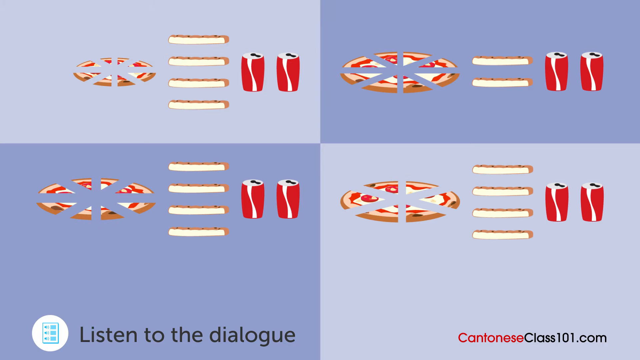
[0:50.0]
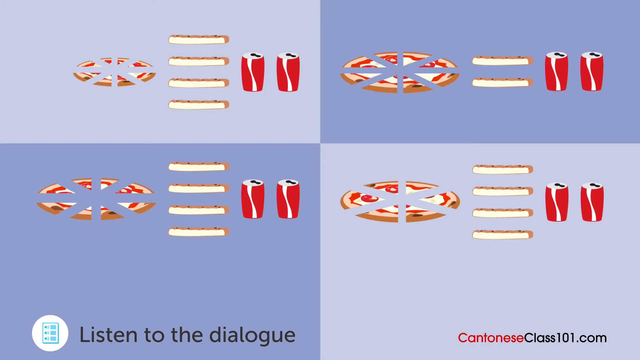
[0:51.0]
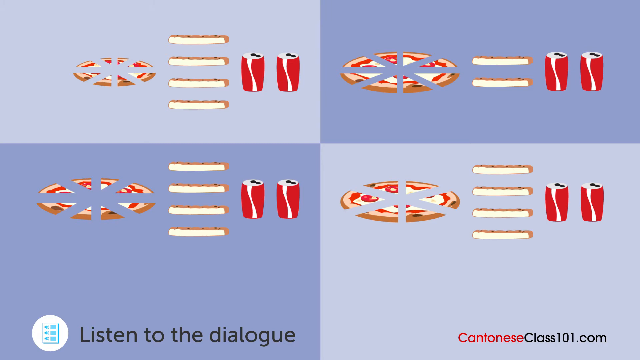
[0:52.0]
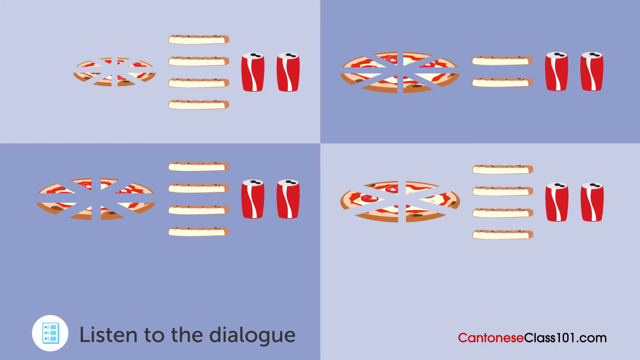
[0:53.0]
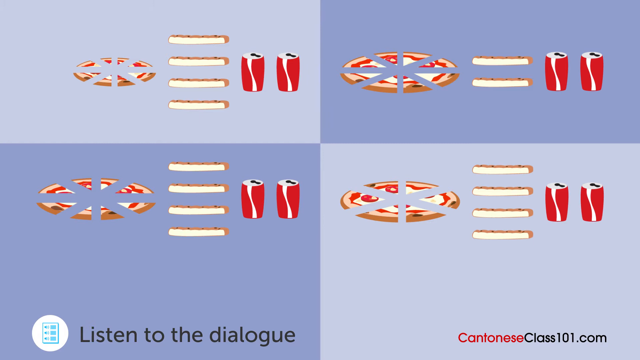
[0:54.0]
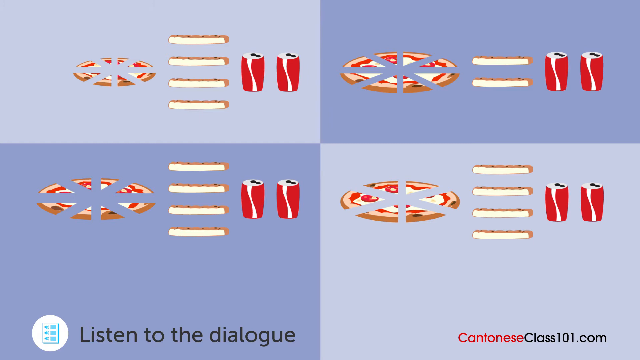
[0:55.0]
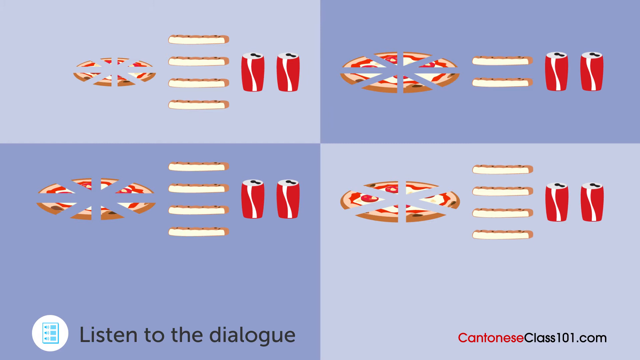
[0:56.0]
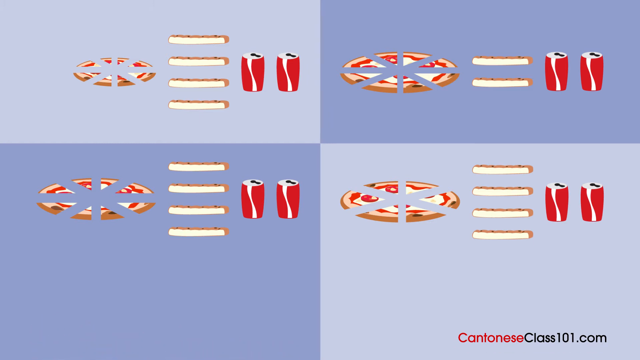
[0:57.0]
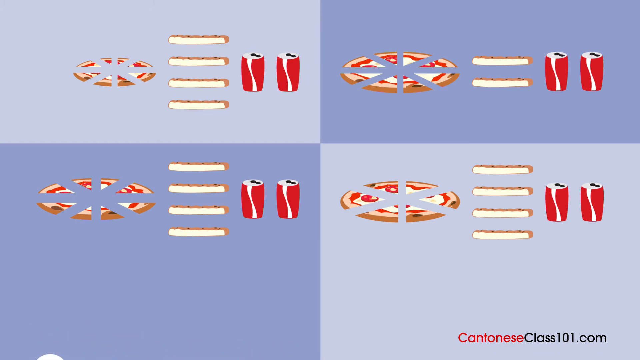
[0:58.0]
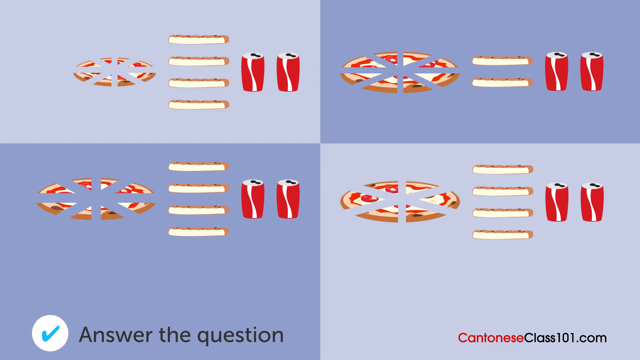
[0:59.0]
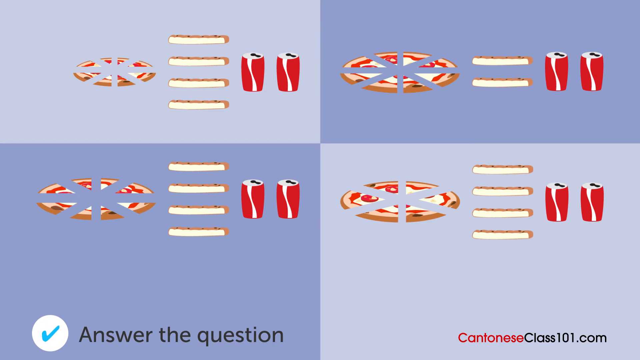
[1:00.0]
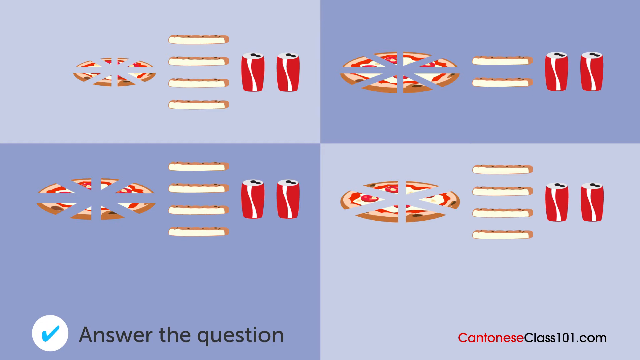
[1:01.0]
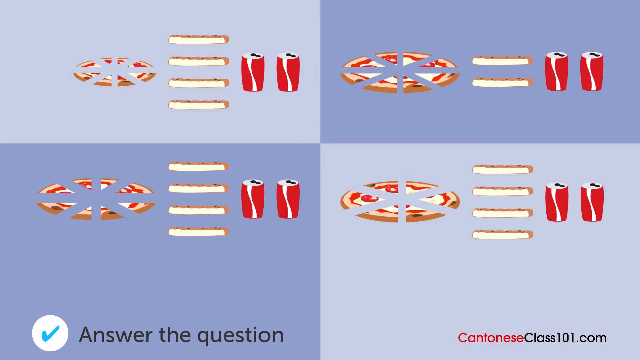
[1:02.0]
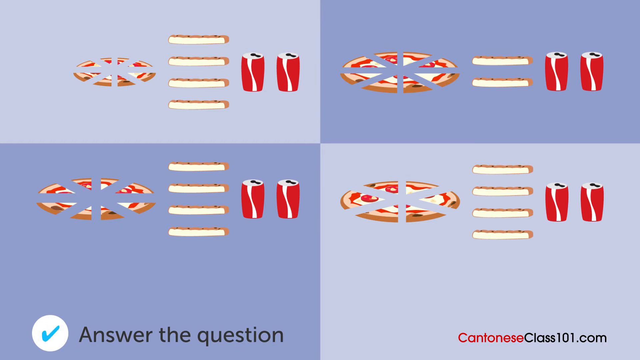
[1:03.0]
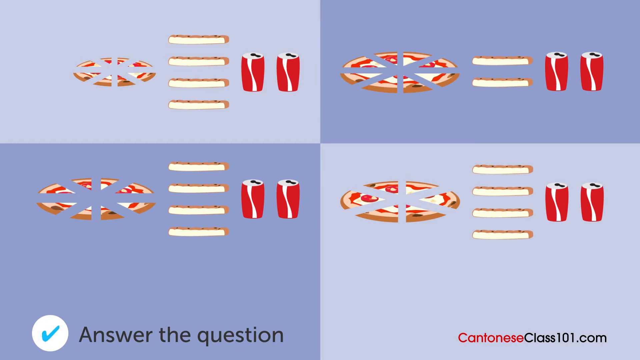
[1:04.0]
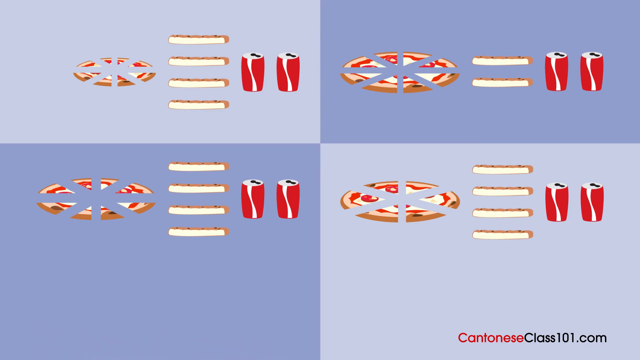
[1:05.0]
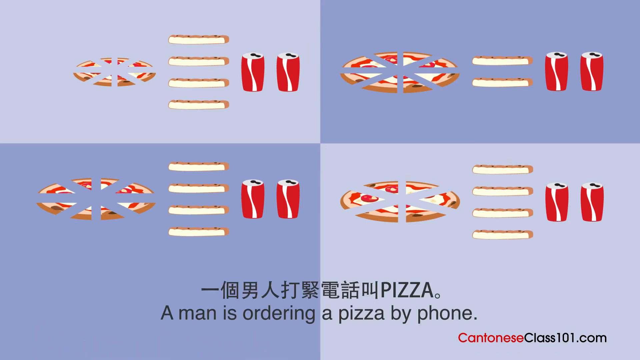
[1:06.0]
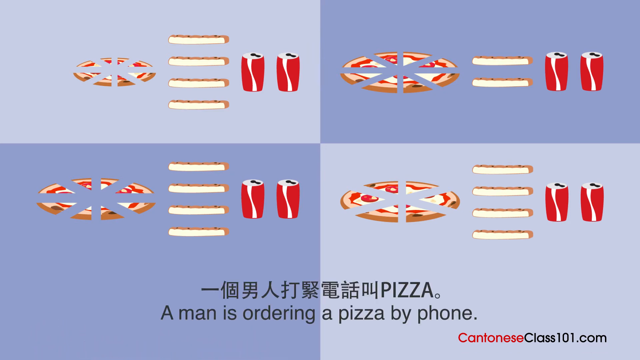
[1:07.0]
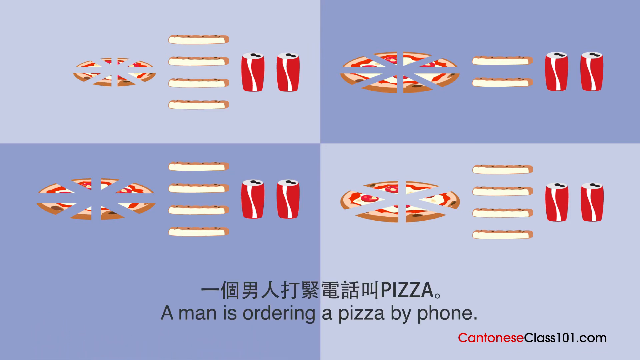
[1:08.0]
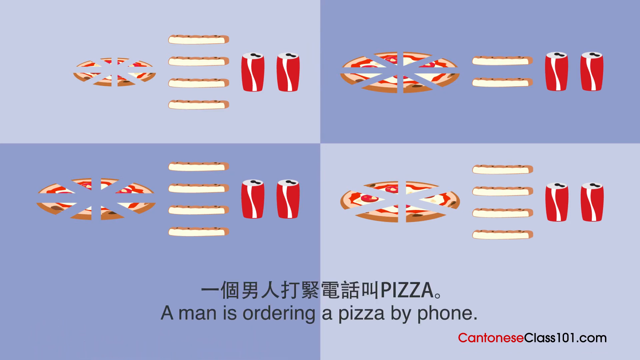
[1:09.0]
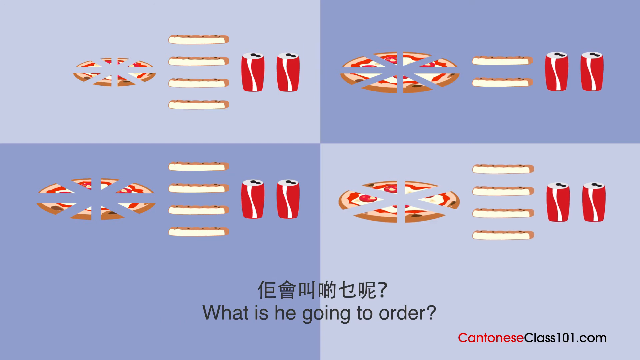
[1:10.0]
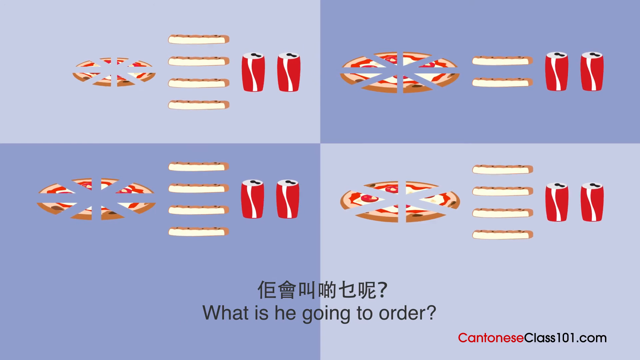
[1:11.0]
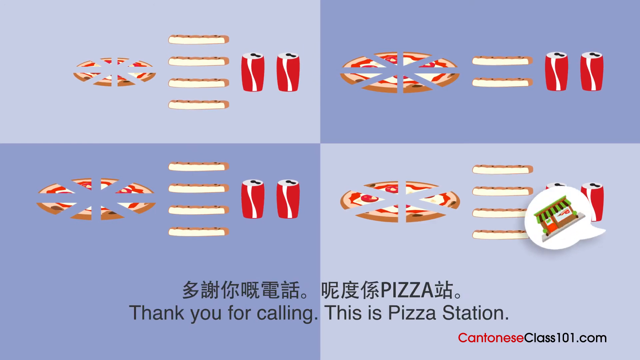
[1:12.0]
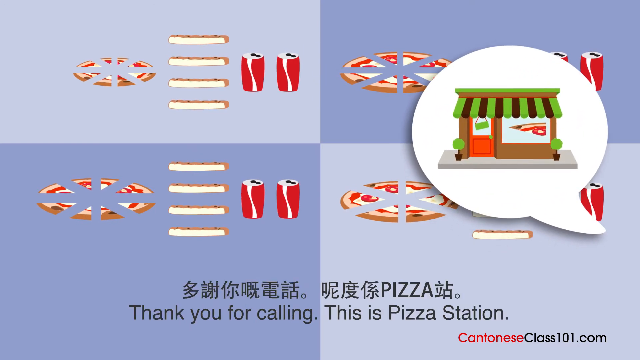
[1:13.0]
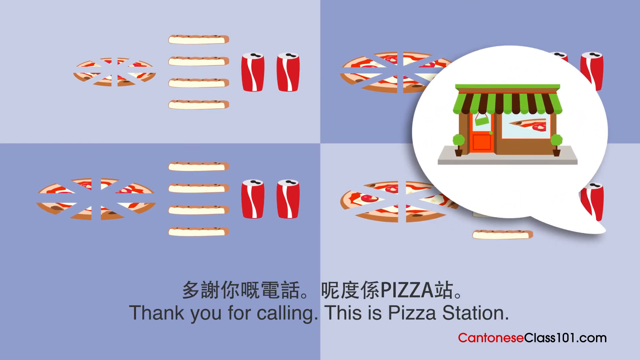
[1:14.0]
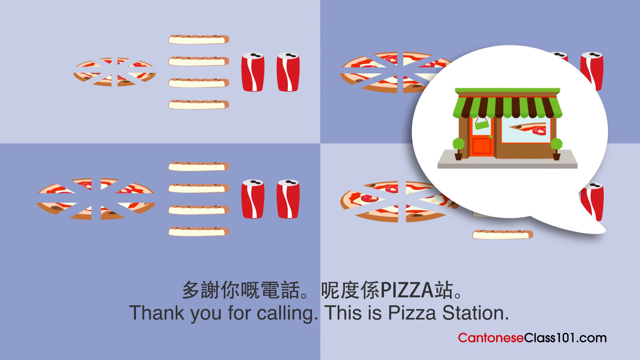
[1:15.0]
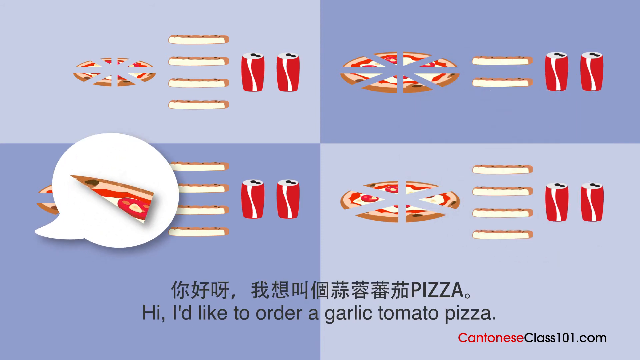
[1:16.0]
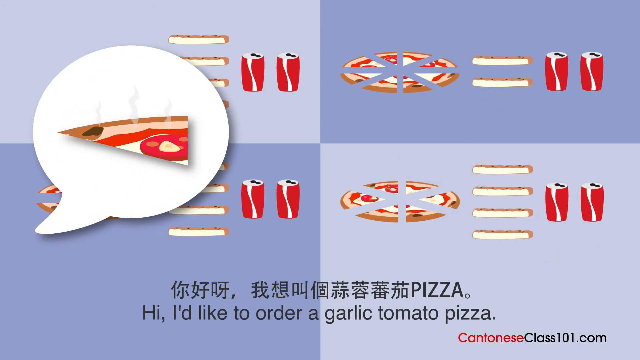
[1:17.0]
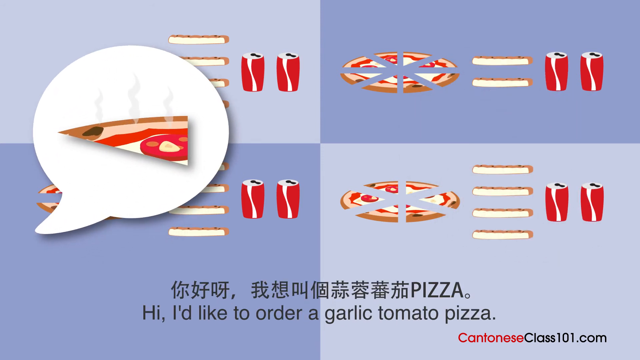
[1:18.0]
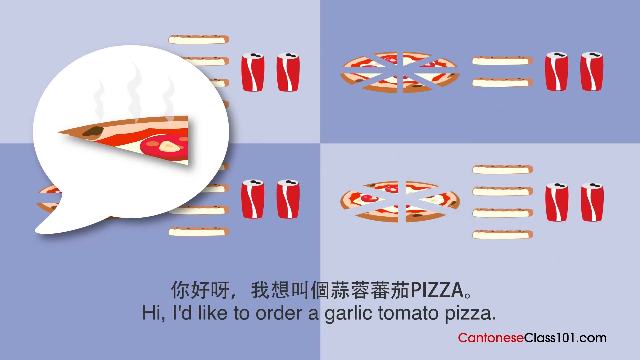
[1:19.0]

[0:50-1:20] The four pictures are more or less the same, with small differences: some have smaller slices of pizza and some bigger, some have more slices and some fewer. One is cut into two halves and the other three are cut into four. The only constant is two cans of cool drink in each picture. An instruction at the bottom of the screen reads "listen to the dialogue," and the next reads "answer the question." Text at the bottom of the screen says "a man is ordering pizza," with the question "what is he going to order." The last statement reads "Thank you for calling. This is the pizza station," and the response reads "I'd like to order garlic tomato pizza," apparently a phone call between someone at the pizza place and a customer.